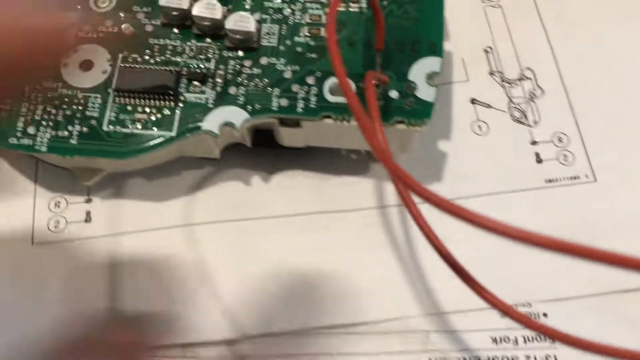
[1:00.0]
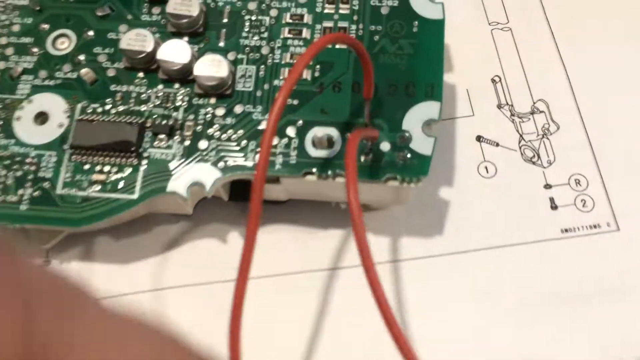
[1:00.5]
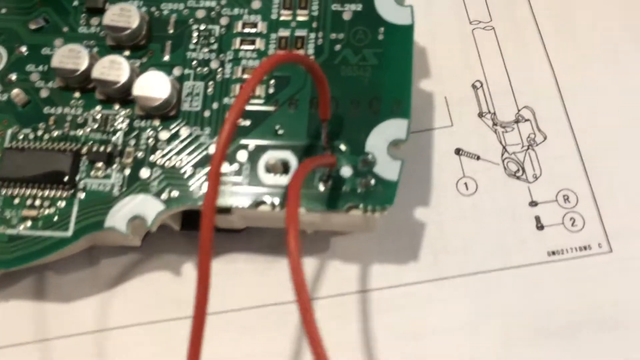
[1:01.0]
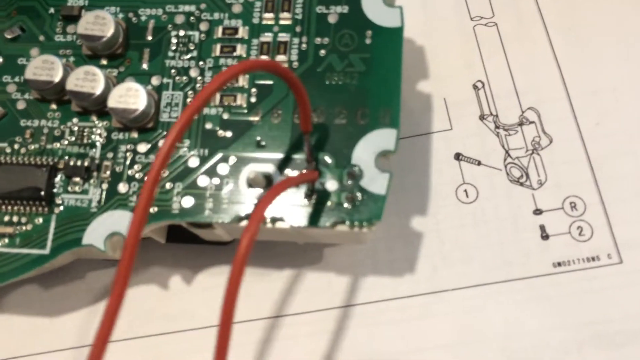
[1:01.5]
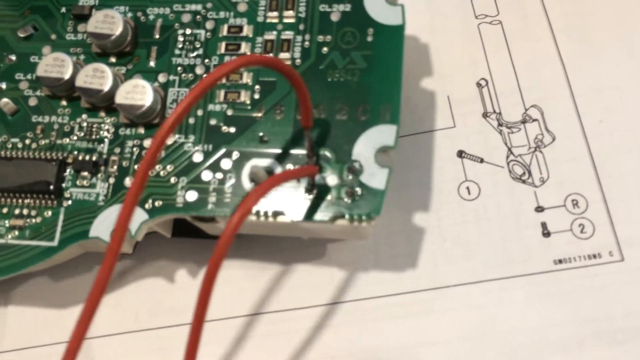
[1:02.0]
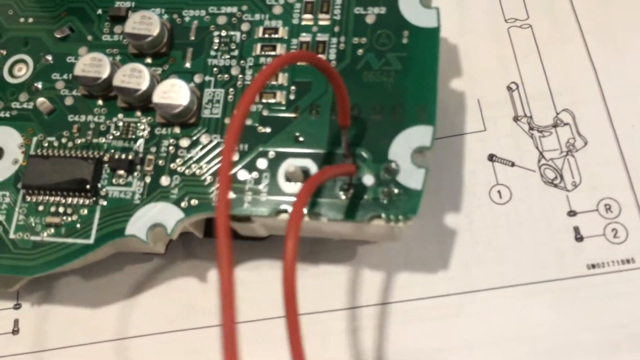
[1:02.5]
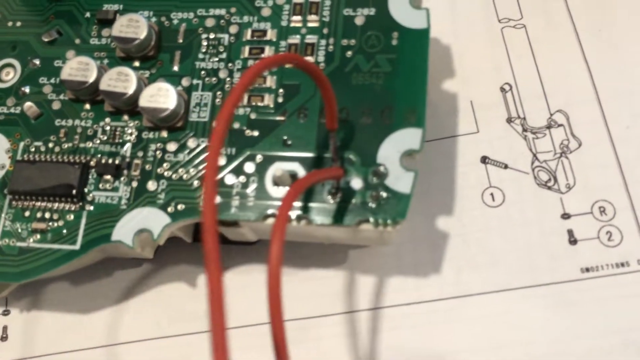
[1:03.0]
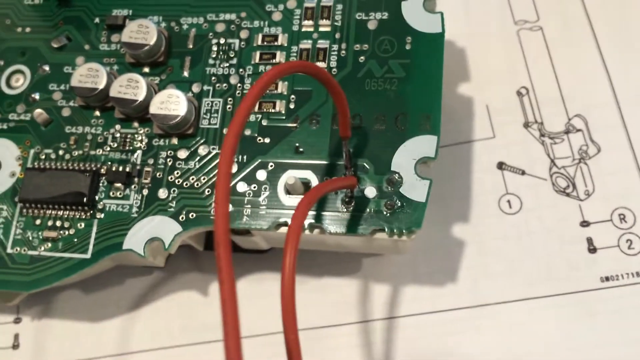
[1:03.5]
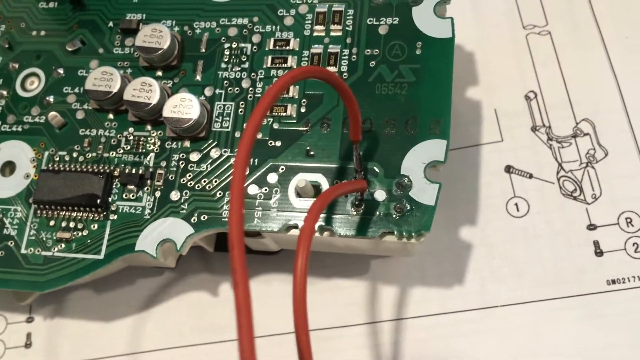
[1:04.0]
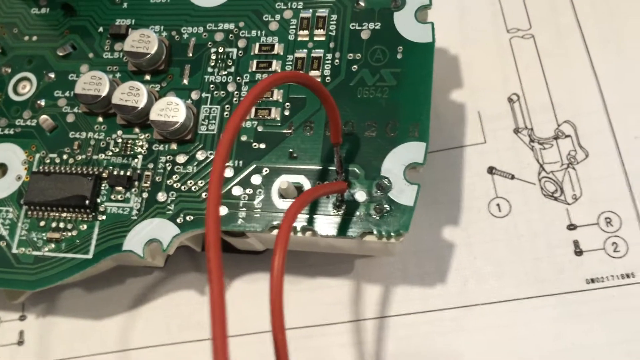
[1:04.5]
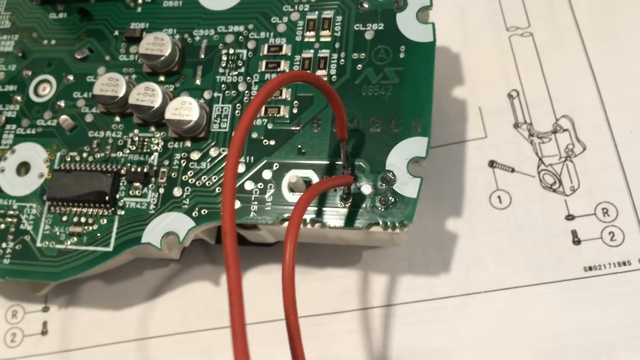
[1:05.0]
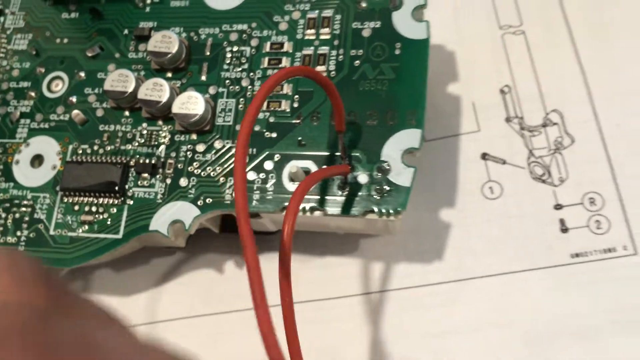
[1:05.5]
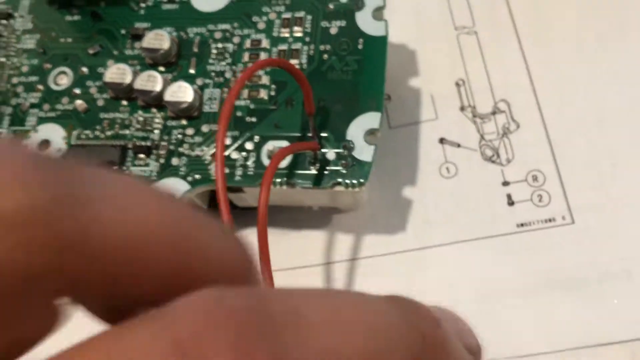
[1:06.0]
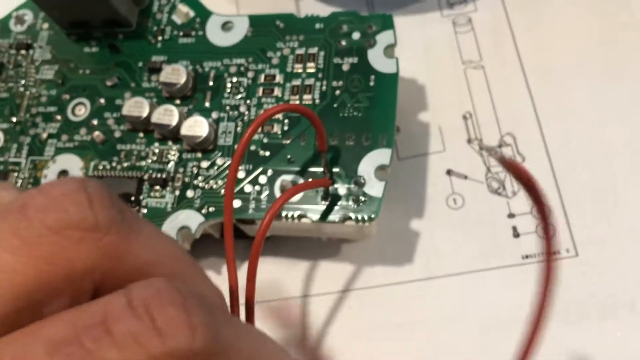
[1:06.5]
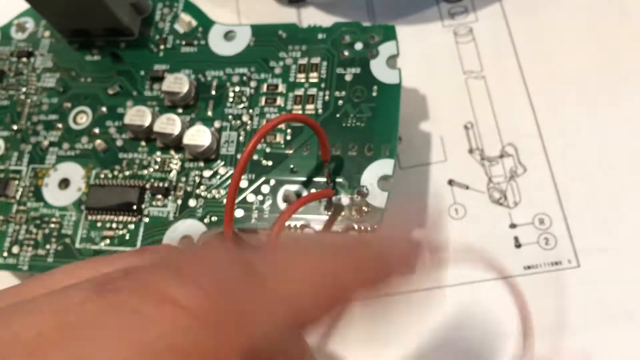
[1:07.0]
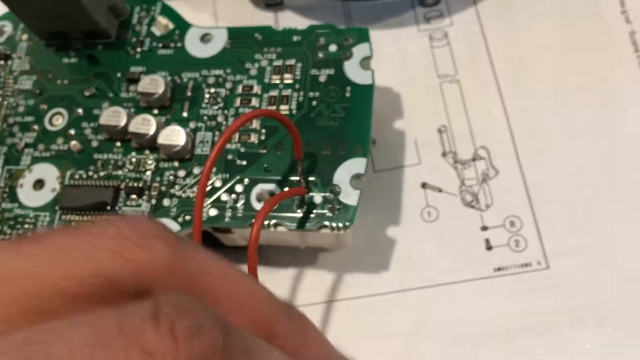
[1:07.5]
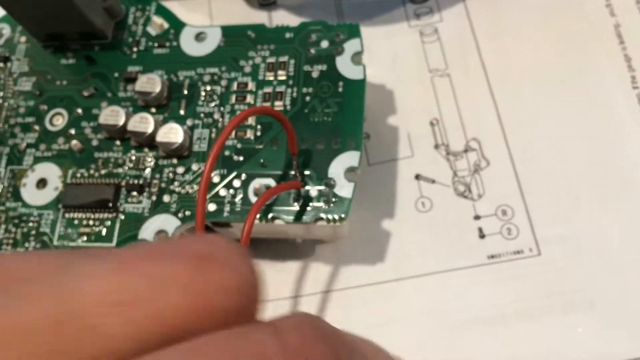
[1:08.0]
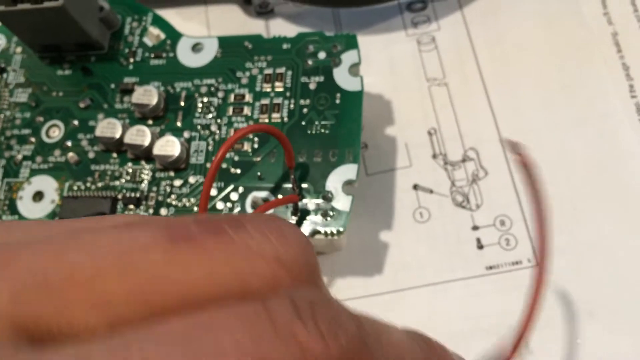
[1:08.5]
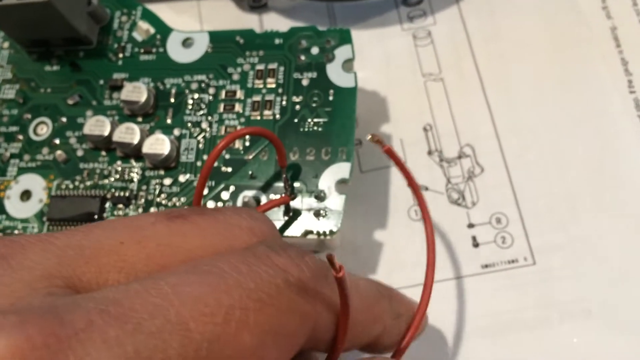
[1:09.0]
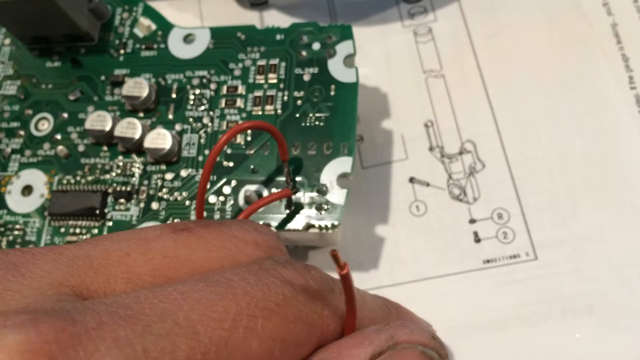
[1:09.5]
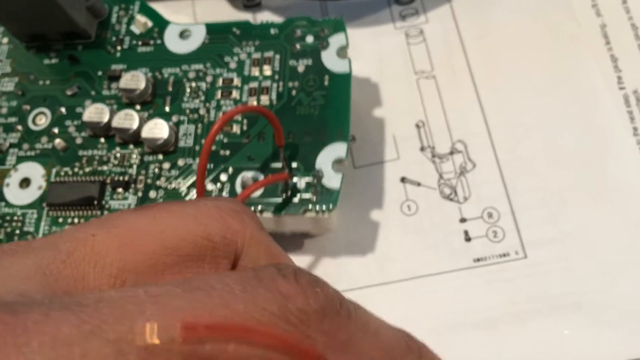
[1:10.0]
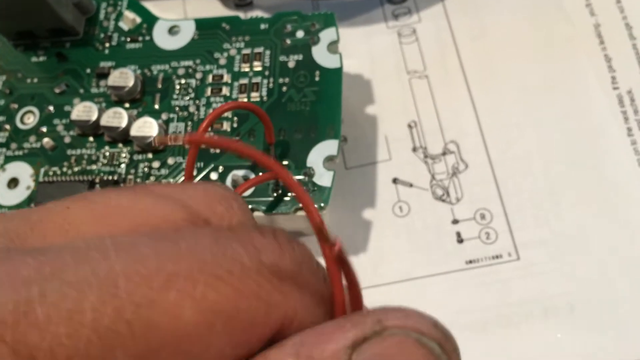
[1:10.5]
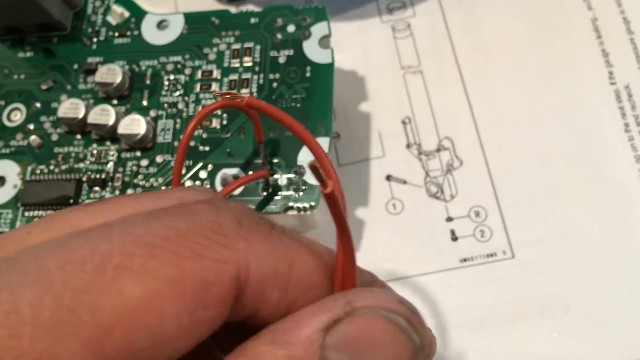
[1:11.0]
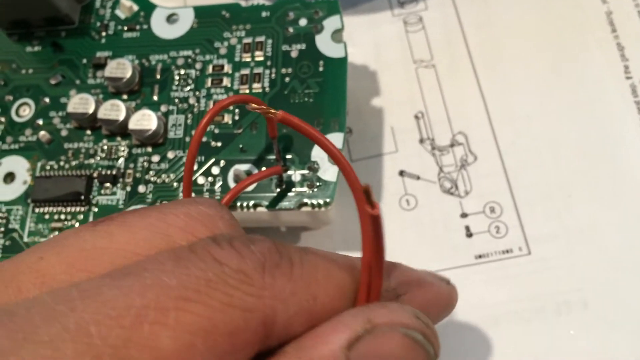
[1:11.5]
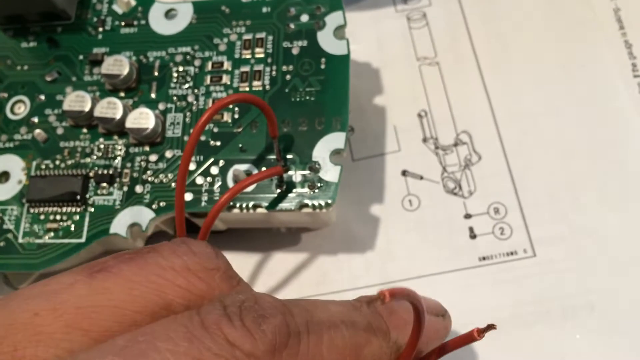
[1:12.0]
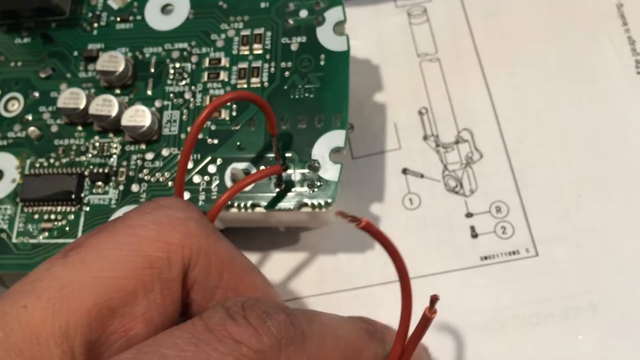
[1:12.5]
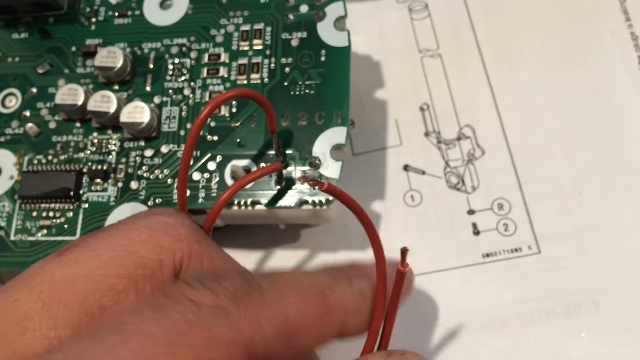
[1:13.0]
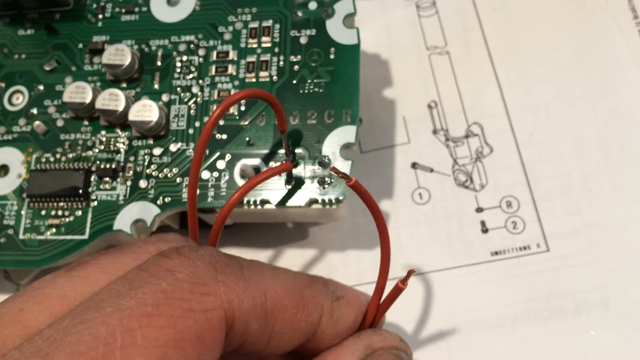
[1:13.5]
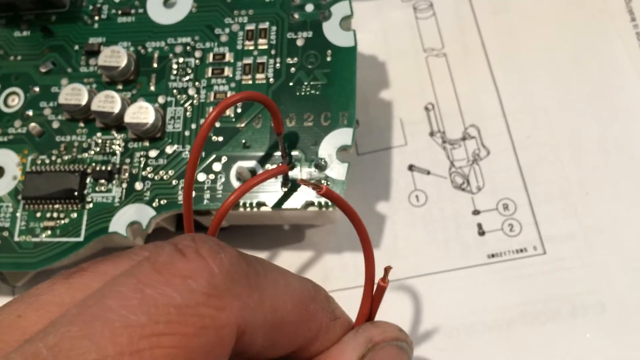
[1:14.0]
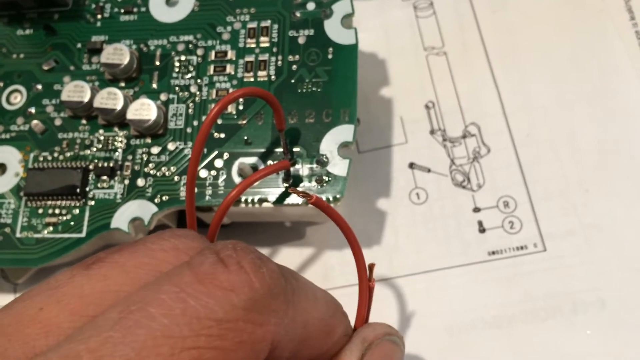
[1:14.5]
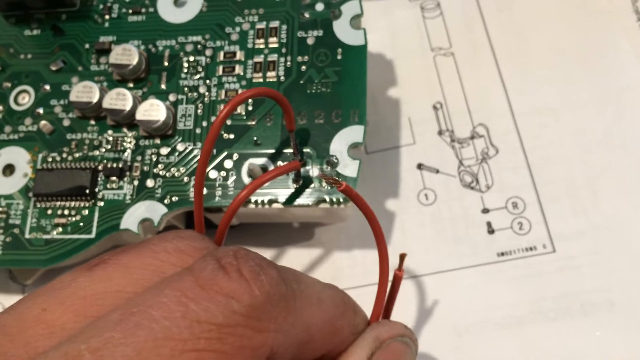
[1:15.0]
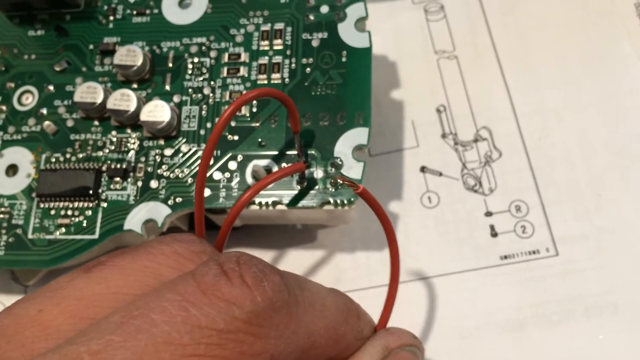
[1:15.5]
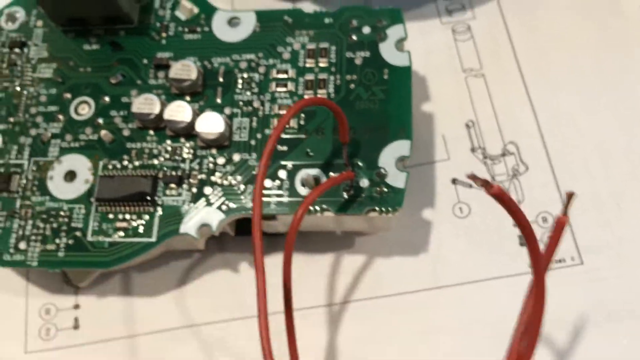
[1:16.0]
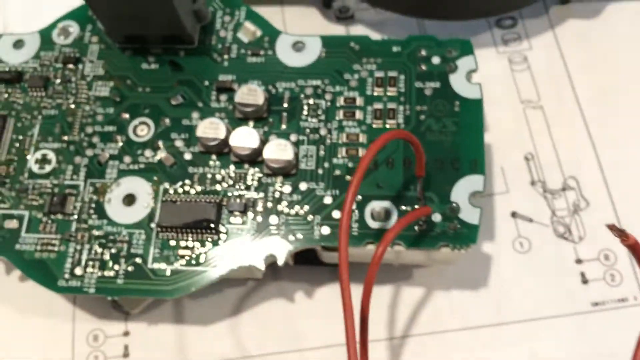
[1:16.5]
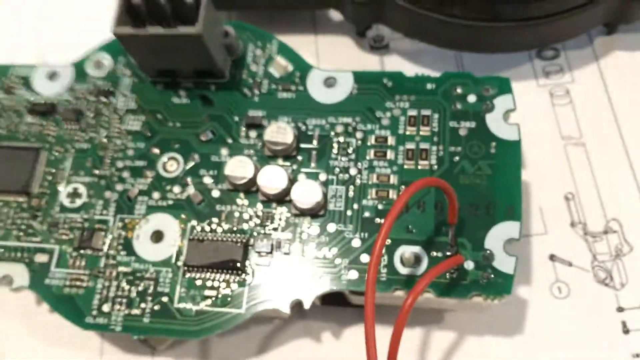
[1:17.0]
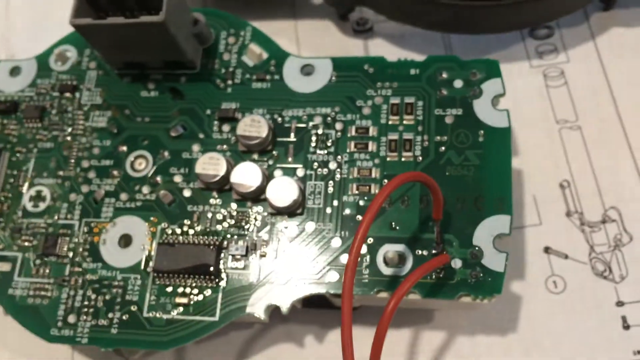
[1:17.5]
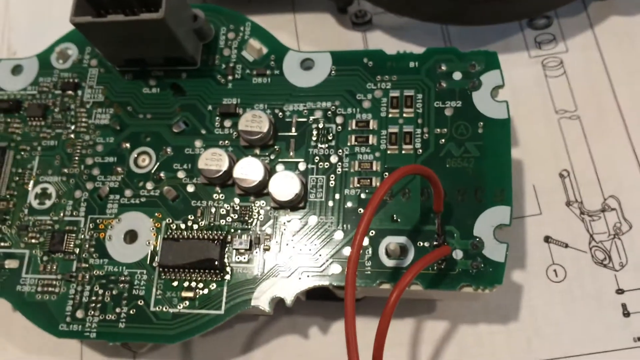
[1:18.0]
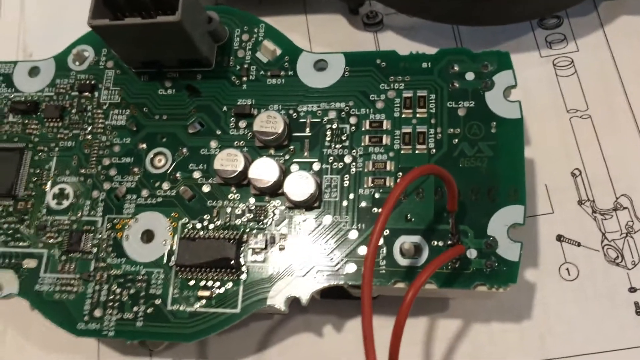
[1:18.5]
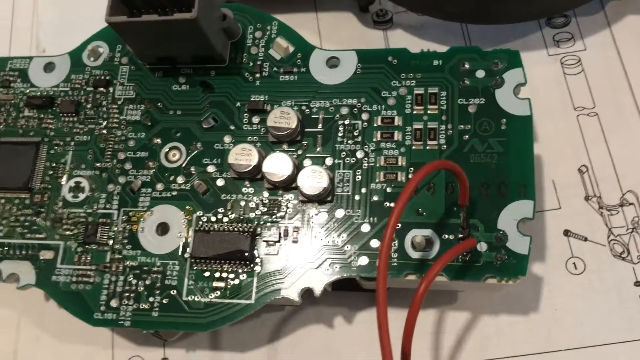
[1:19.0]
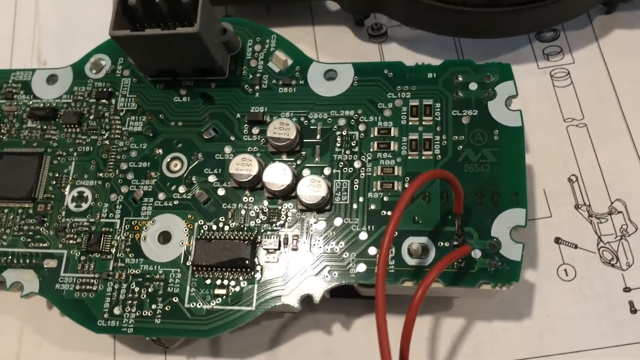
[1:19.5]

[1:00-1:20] He touches the red wires, then refocuses on the board, which shows all the different connections and power sockets. The back of the board is a sort of green computer-based board with lots of black and metallic gray and silver prongs, ports and chipsets. After finishing with the wires, he sets them down, probably intending to flip the device over again.